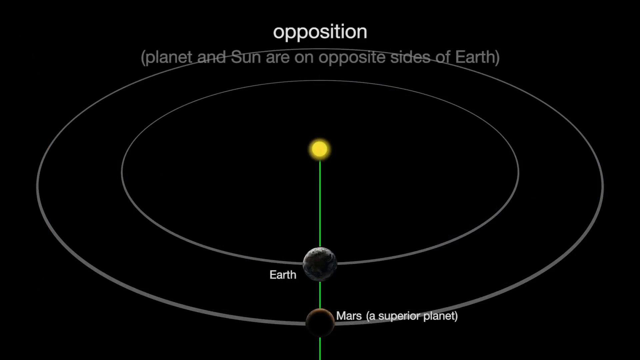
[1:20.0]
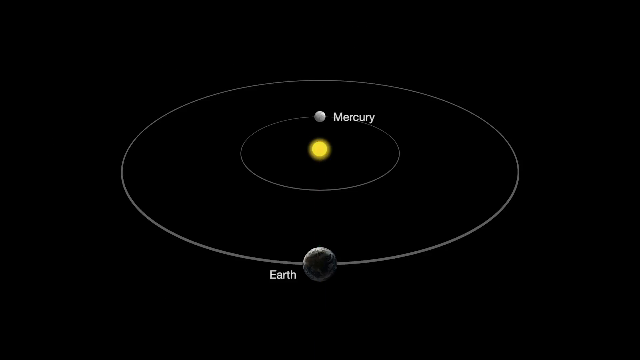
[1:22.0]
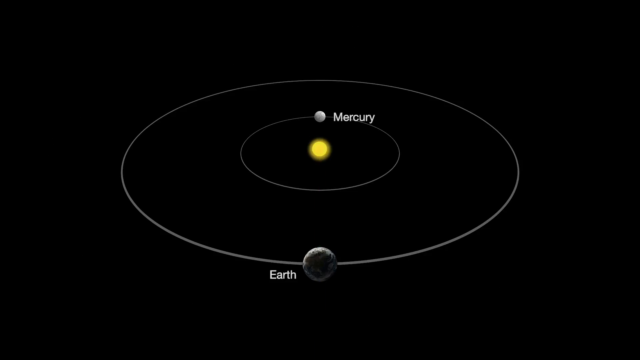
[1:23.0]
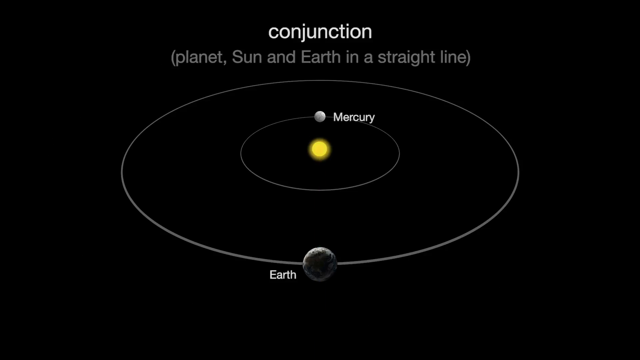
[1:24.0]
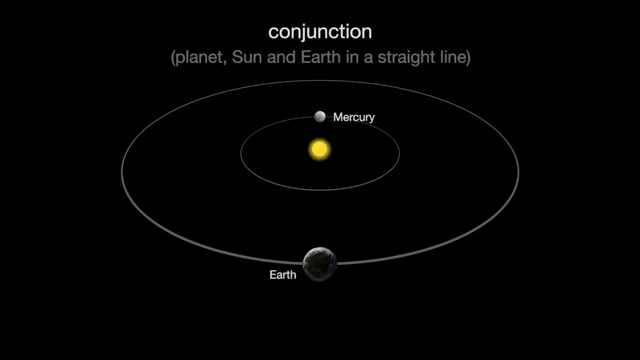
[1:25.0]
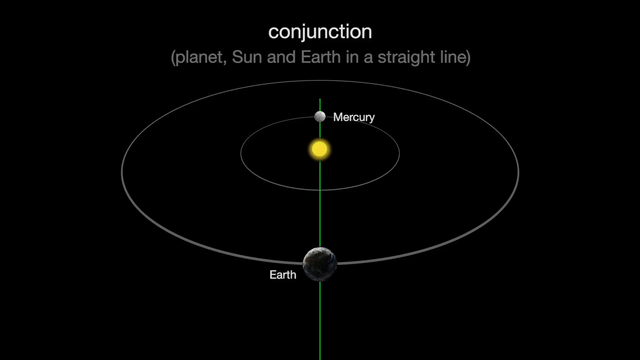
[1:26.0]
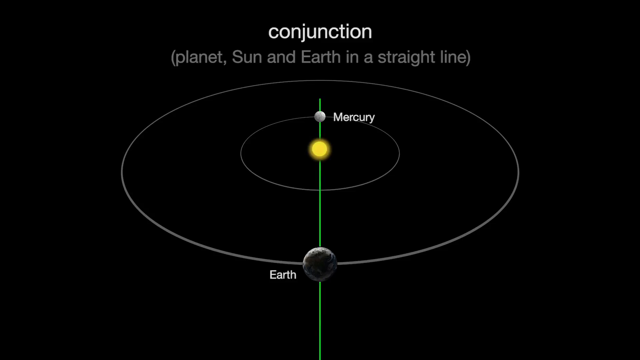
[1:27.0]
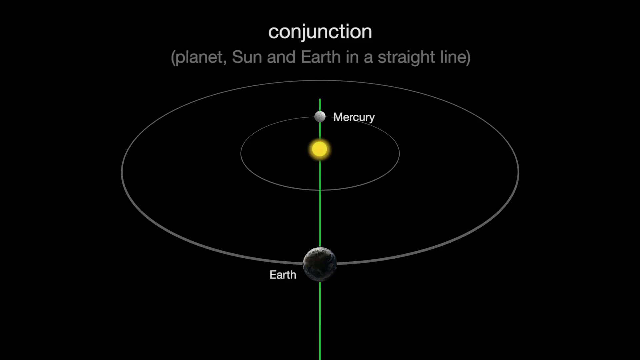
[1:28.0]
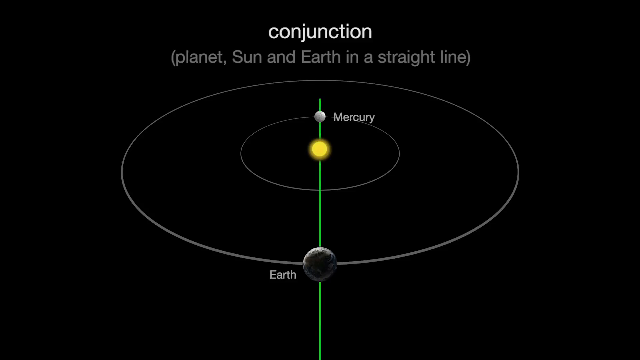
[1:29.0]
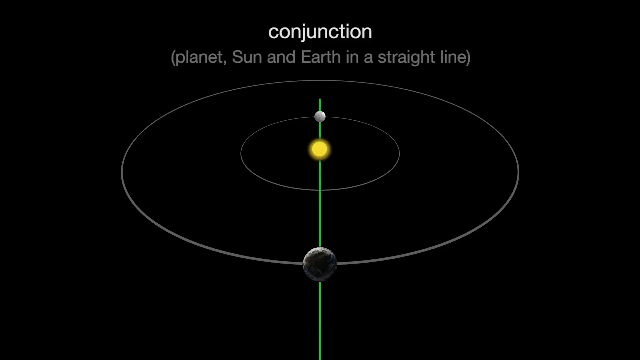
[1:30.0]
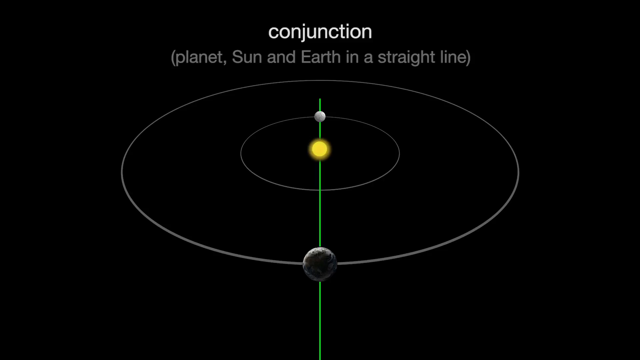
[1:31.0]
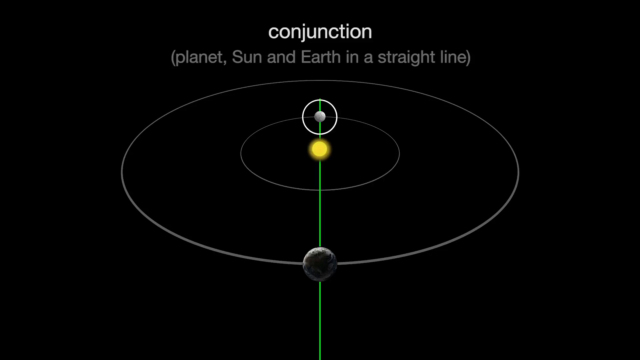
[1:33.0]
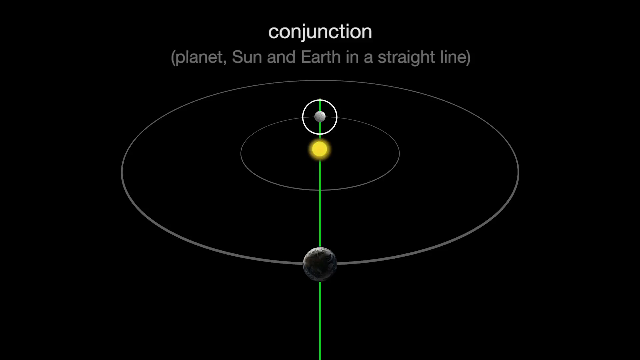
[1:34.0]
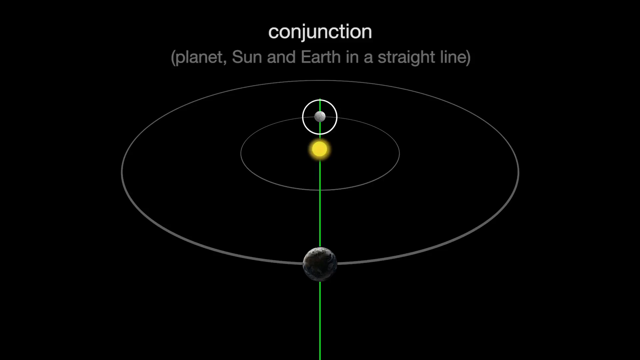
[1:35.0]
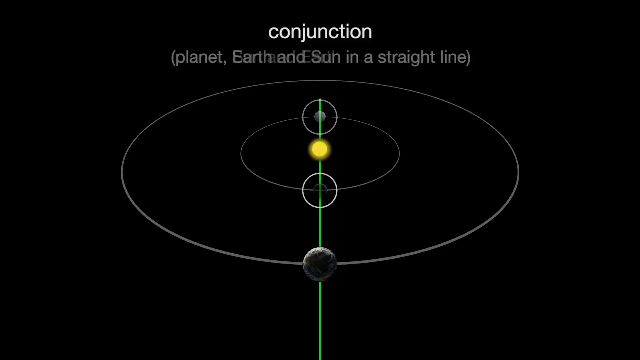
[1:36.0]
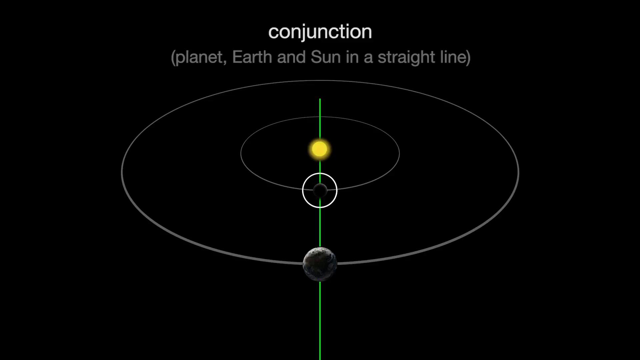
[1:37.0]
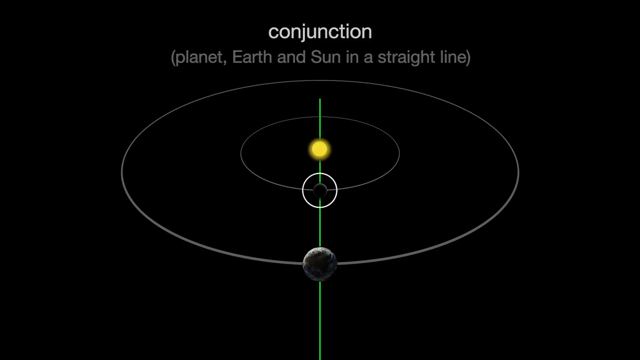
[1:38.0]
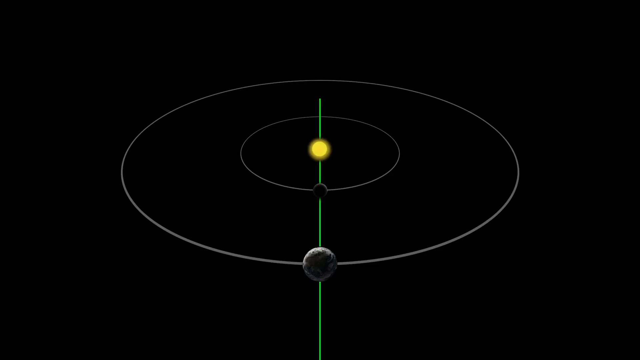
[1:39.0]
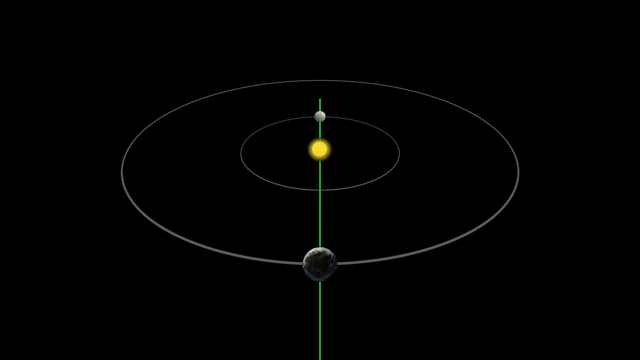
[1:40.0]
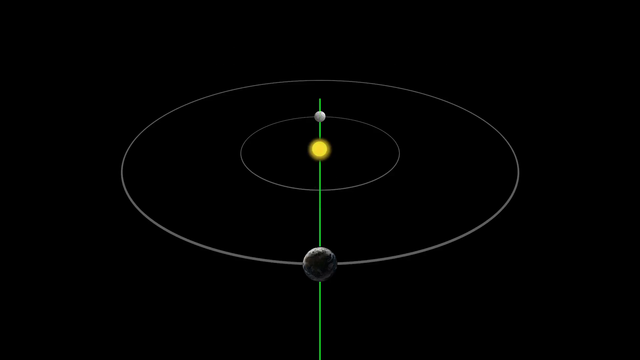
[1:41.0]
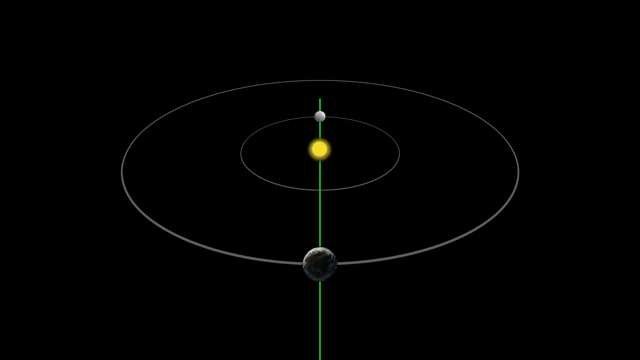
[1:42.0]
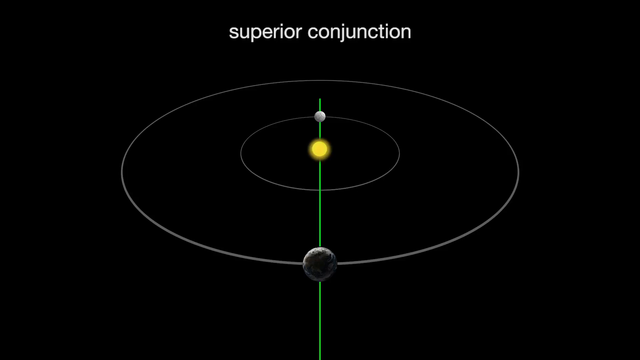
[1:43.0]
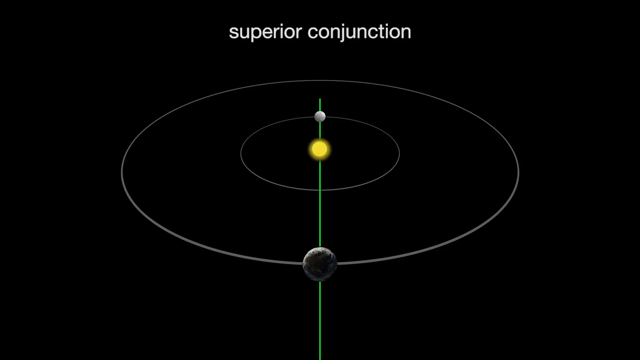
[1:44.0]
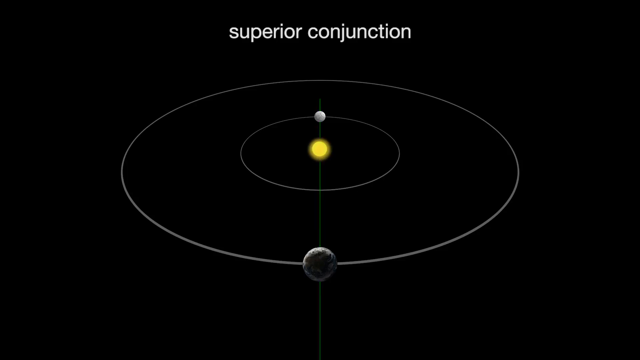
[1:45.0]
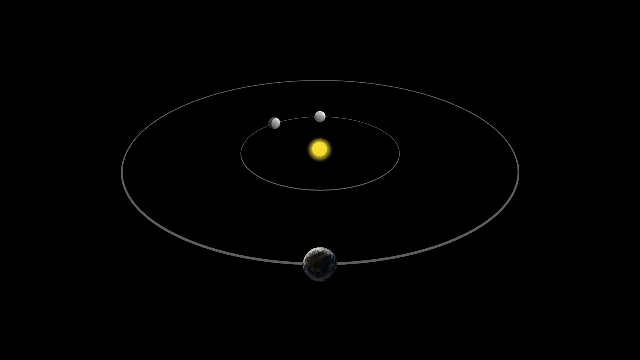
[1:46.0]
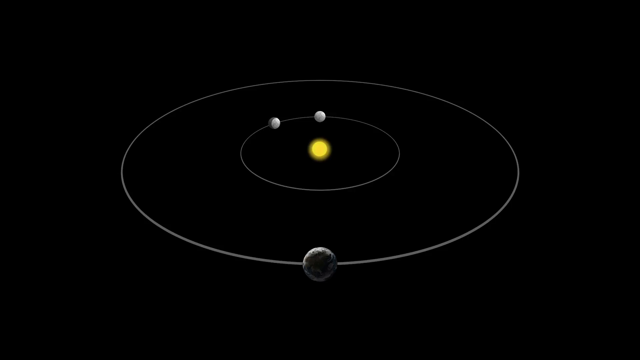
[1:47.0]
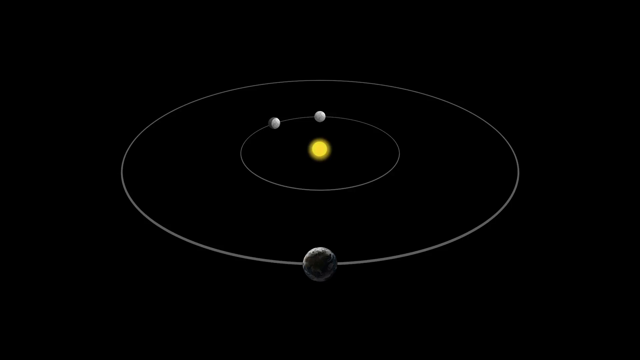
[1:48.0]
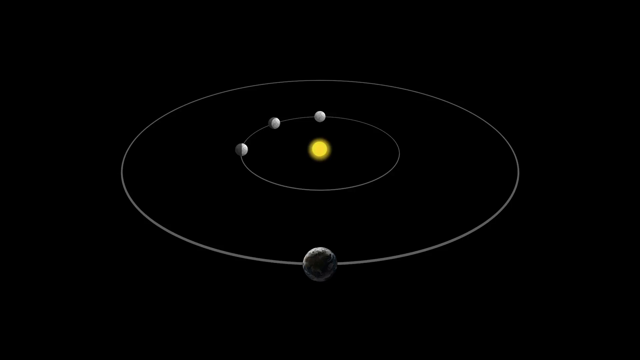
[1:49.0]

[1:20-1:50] Another solar system diagram shows Mars, Earth and the Sun. White text at the top reads "opposition", with gray text right below it reading "(planet and Sun are on opposite sides of Earth)". Mars is shown right behind Earth, with the Sun on the opposite side. Next, Mercury is shown on the other side of the Sun and Earth, with white text at the top reading "conjunction" and gray text below it reading "(planet, Sun, and Earth in a straight line)". The view then sort of circles in on Mercury.